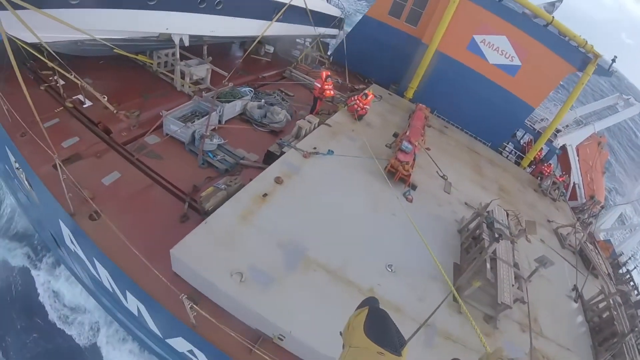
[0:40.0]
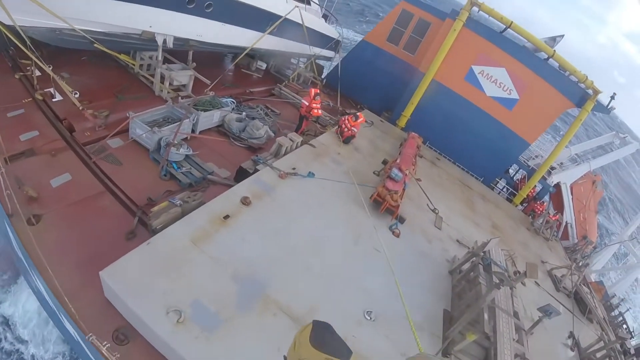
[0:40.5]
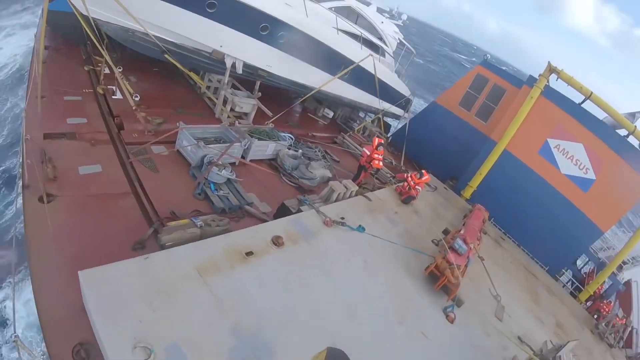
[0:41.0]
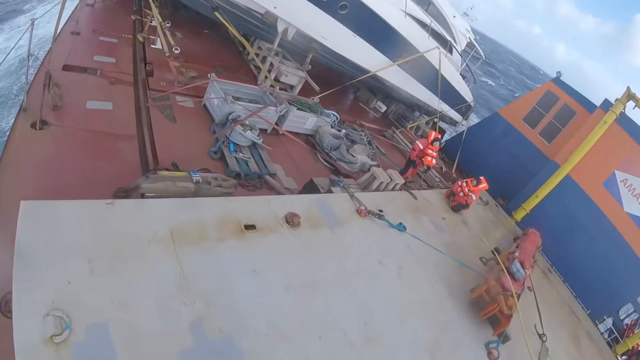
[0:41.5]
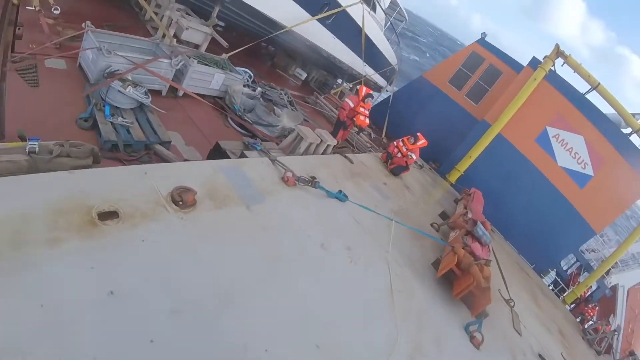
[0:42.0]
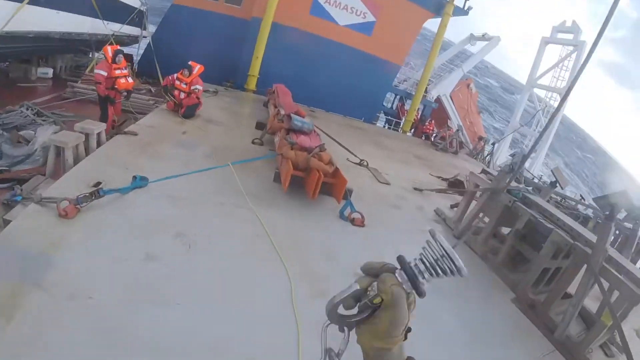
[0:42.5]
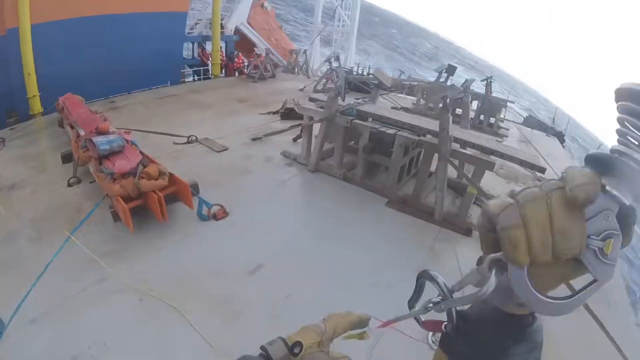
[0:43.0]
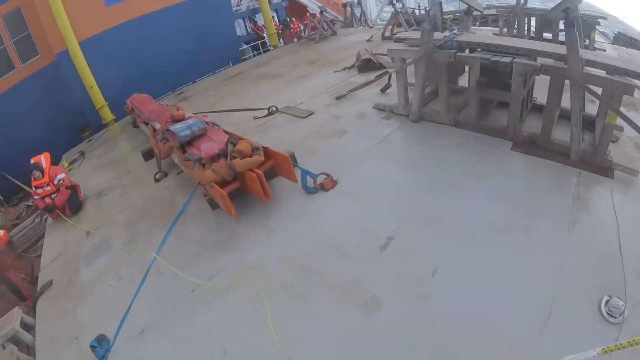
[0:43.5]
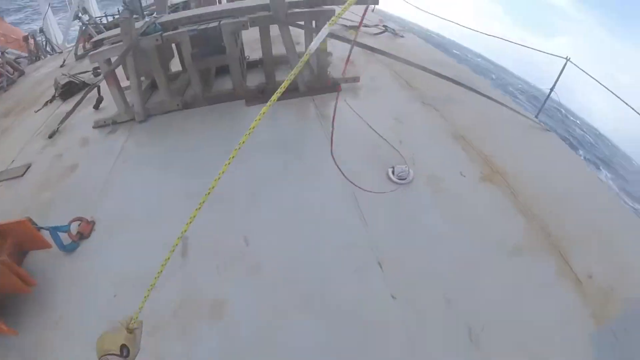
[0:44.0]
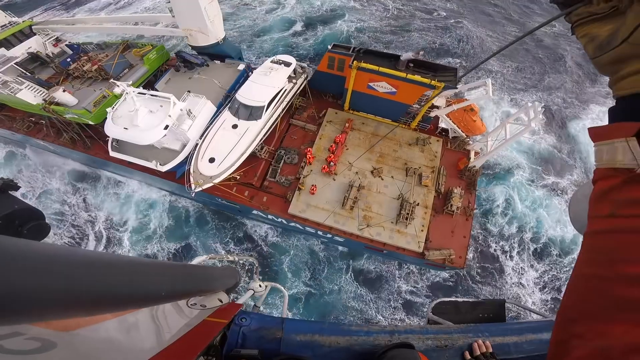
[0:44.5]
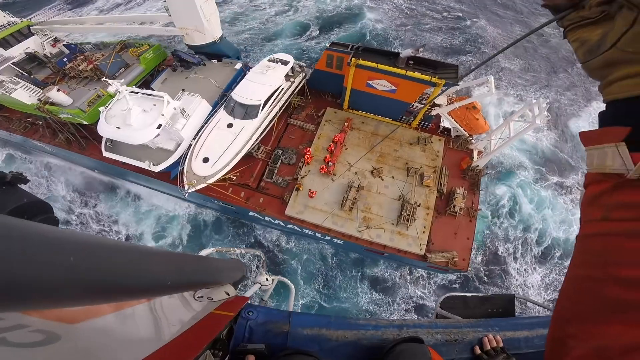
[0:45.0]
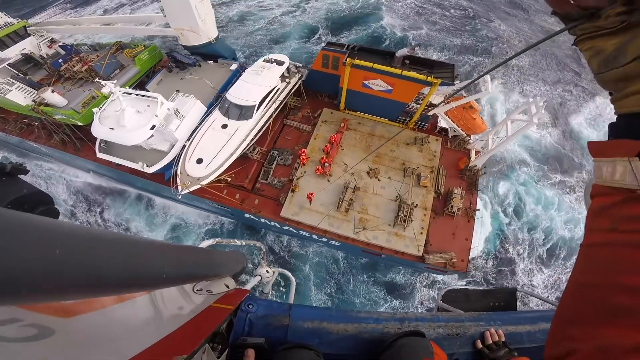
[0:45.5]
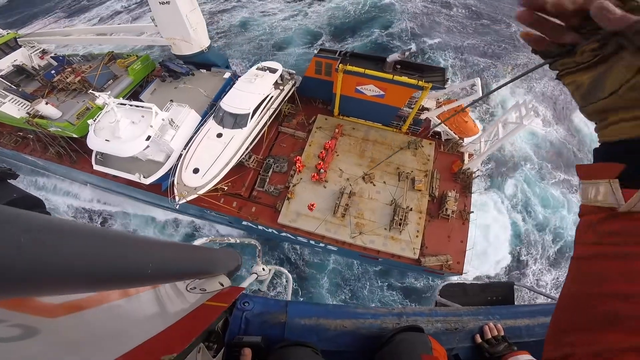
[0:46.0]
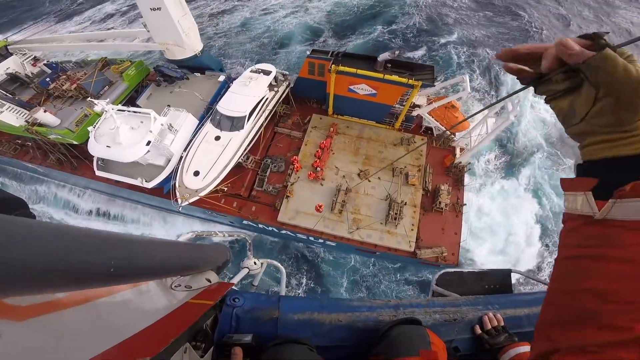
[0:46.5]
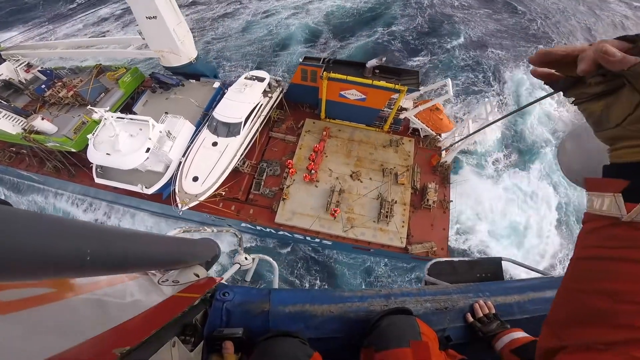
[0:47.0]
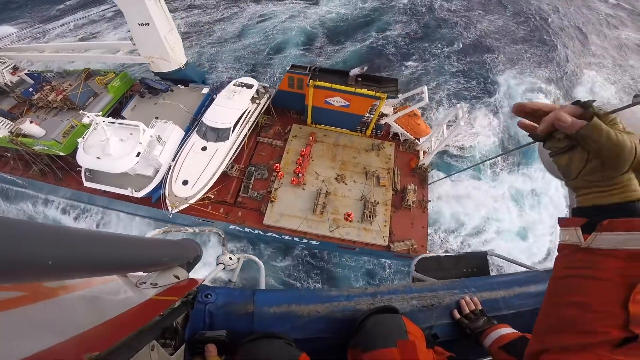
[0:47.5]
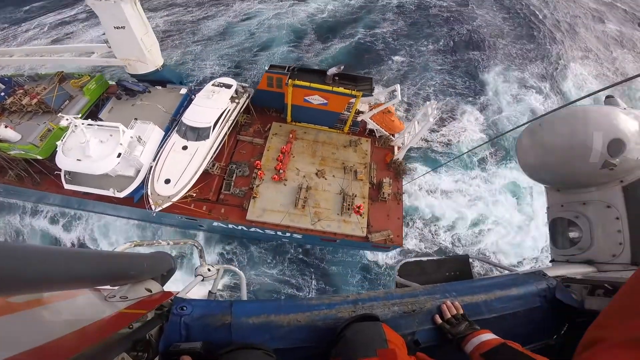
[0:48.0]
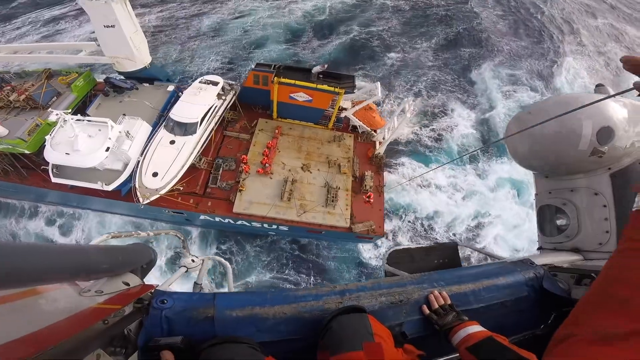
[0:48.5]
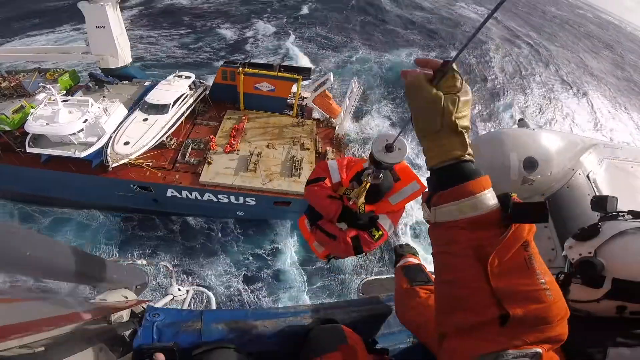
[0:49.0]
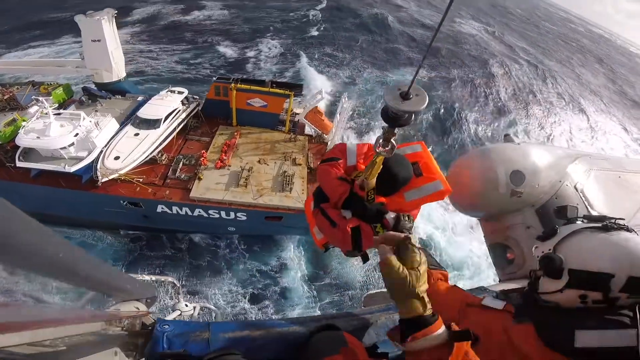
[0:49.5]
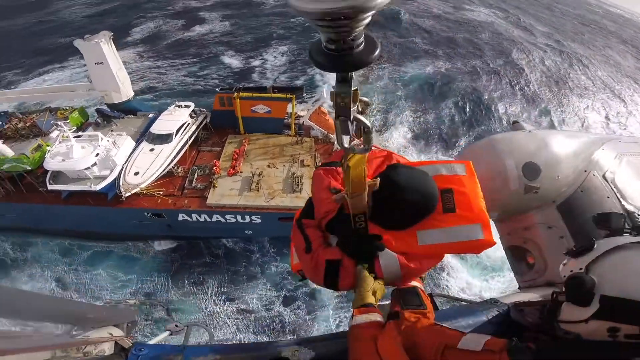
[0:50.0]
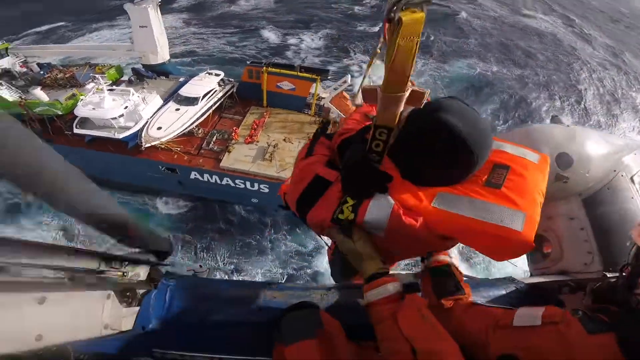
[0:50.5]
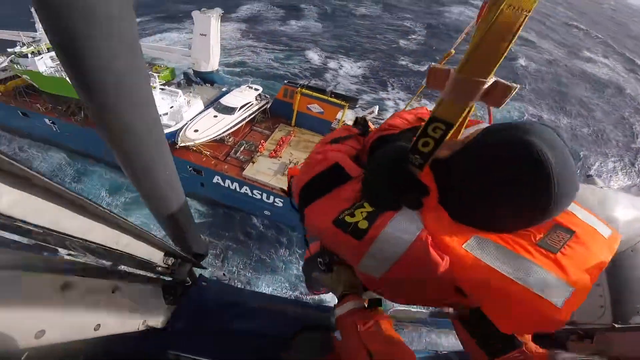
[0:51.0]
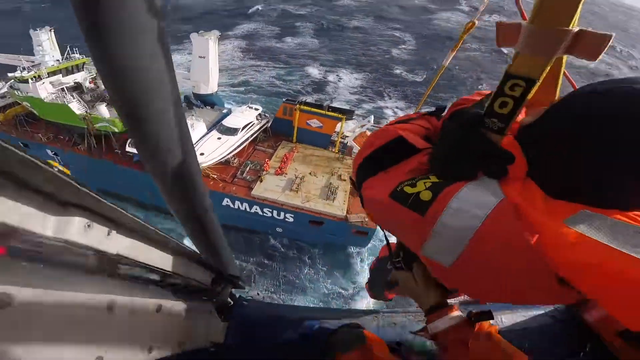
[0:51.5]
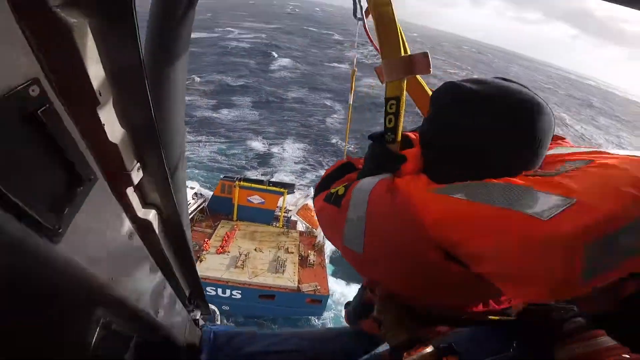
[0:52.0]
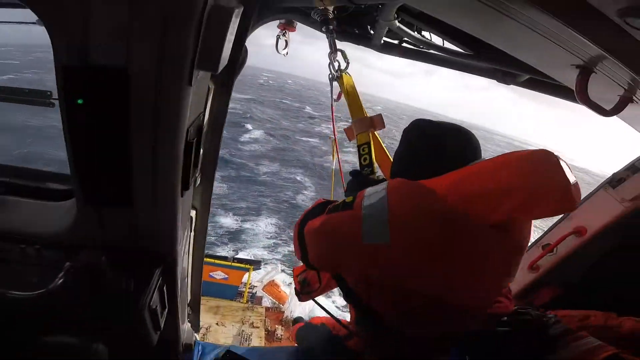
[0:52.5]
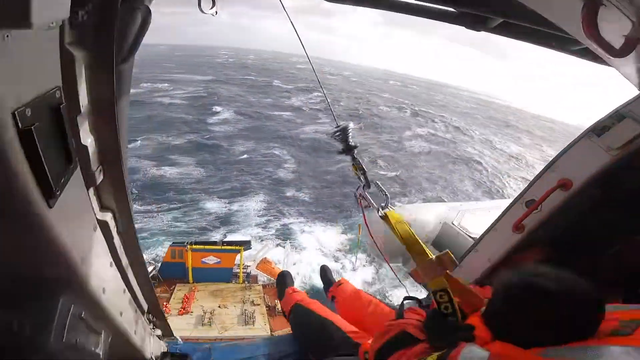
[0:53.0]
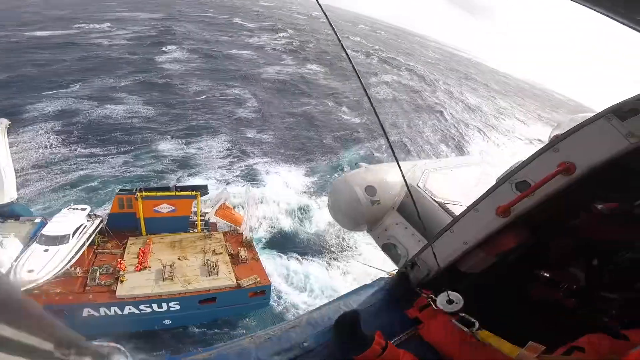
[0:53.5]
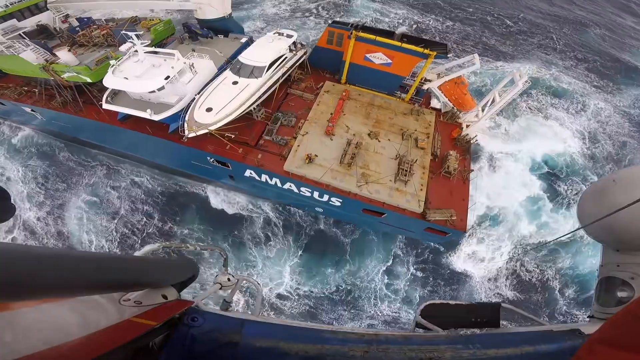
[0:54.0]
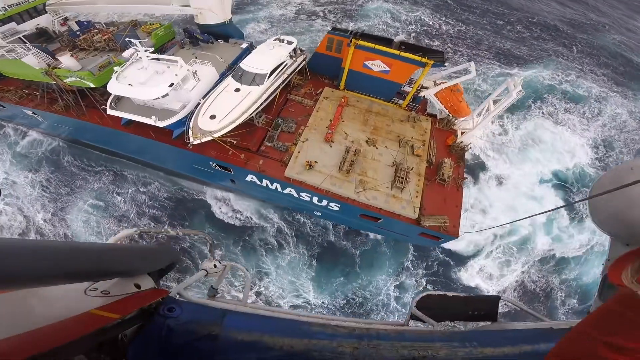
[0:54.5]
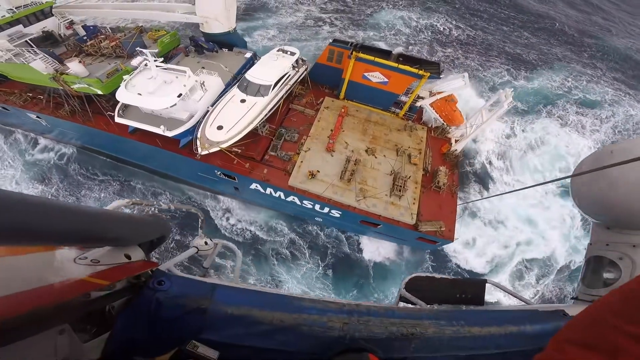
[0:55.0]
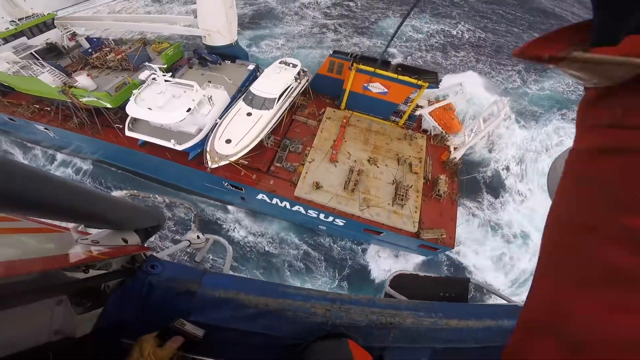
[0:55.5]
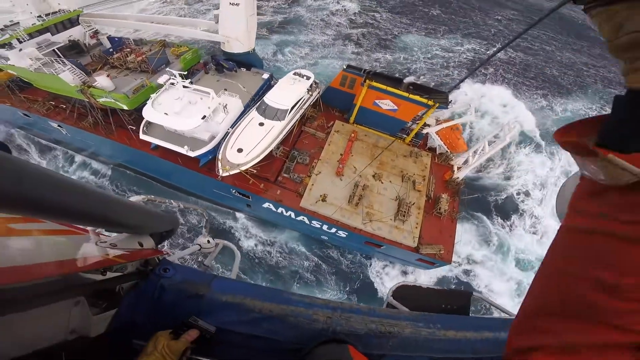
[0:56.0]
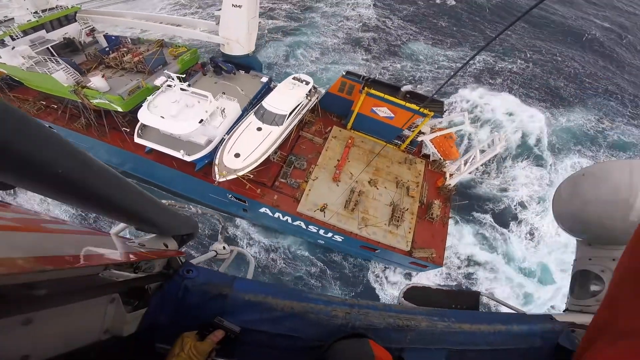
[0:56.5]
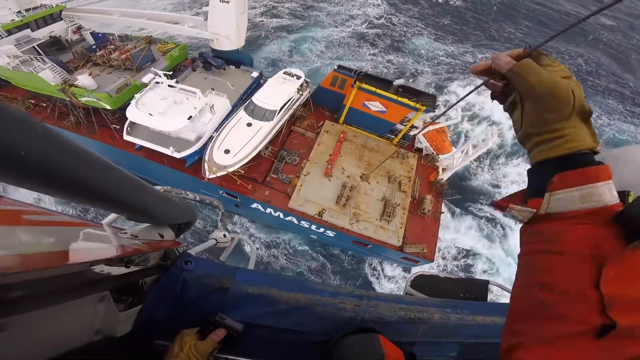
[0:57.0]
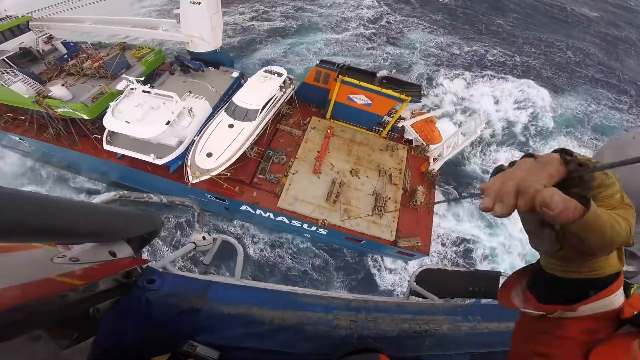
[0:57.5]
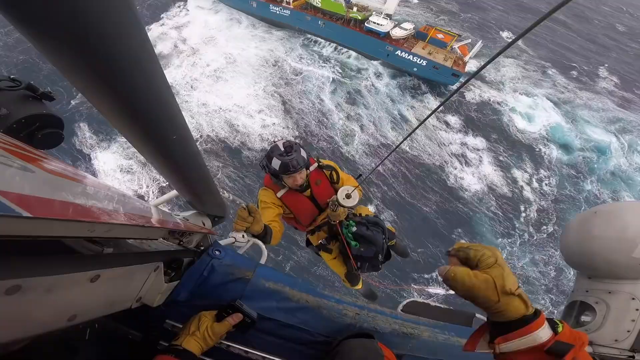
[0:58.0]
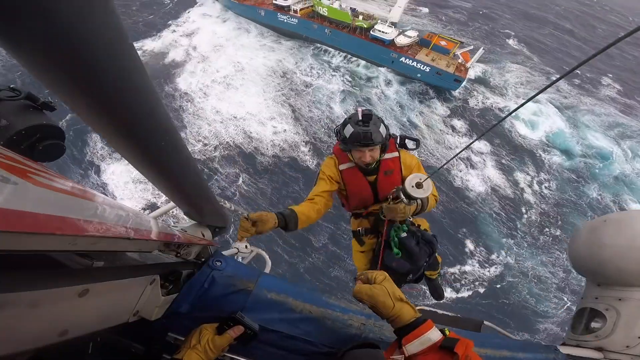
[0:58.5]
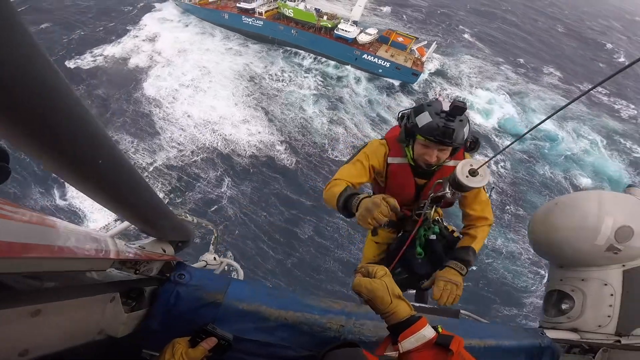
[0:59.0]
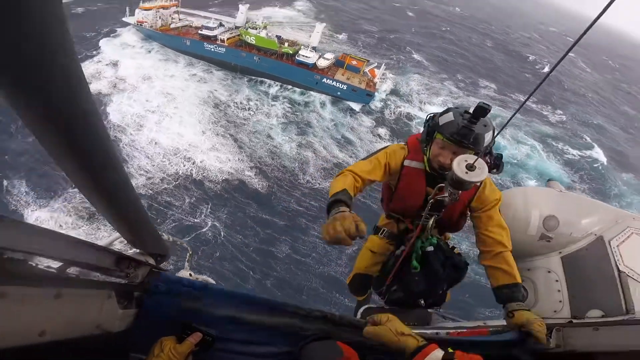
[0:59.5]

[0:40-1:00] The man boards the small vessel, and people are now clearly visible on it. The shot then cuts to a different perspective, apparently with the same person back on the original craft, possibly a helicopter, where men are being pulled up. Two people are rescued with the rope; they wear what look like safety vests and are tightly secured to the rope through the hook as they are pulled up. Toward the end, probably the first person who went down onto the vessel comes back up the same rope. It seems to be a rescue mission by a helicopter.